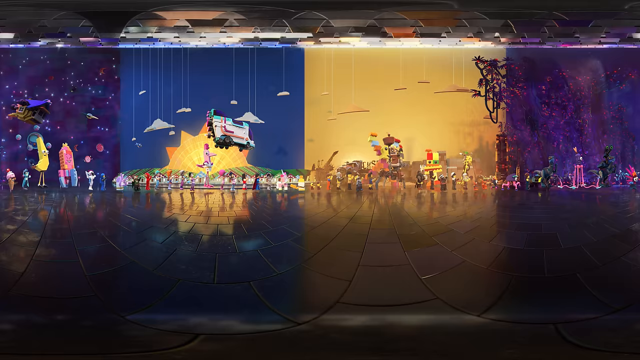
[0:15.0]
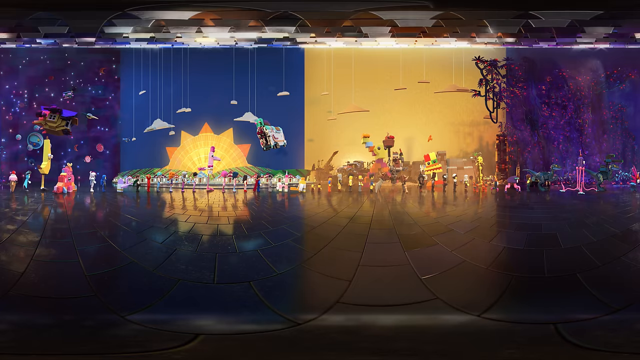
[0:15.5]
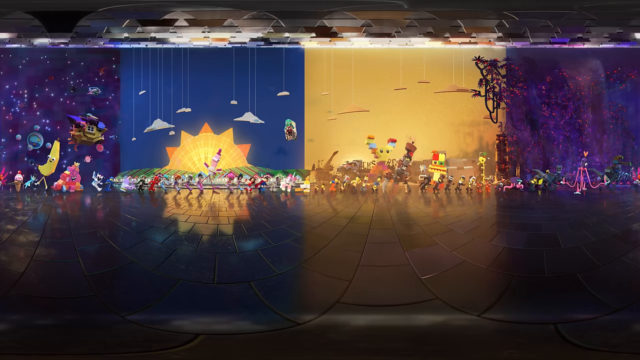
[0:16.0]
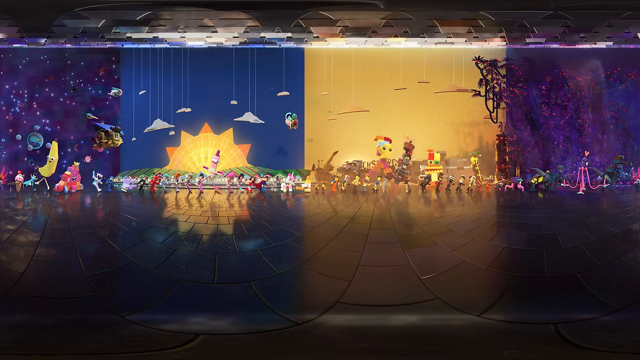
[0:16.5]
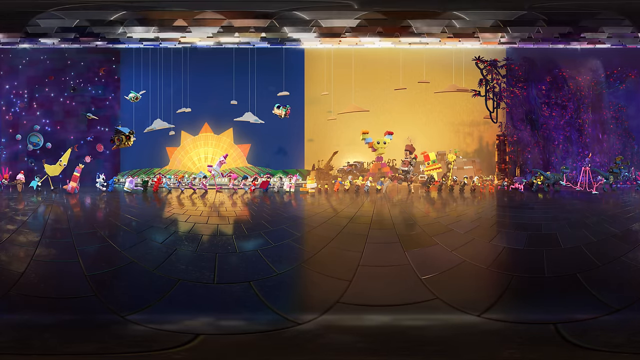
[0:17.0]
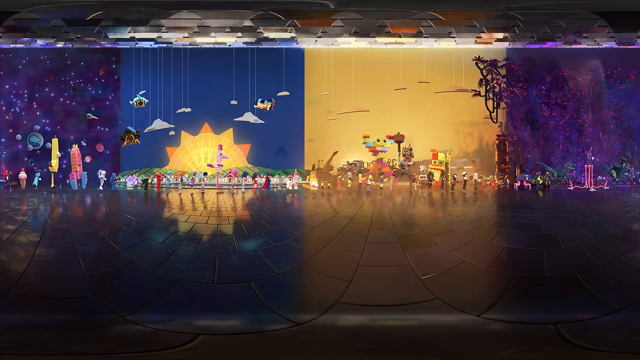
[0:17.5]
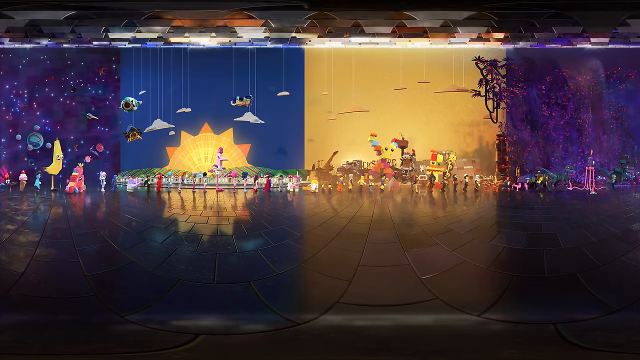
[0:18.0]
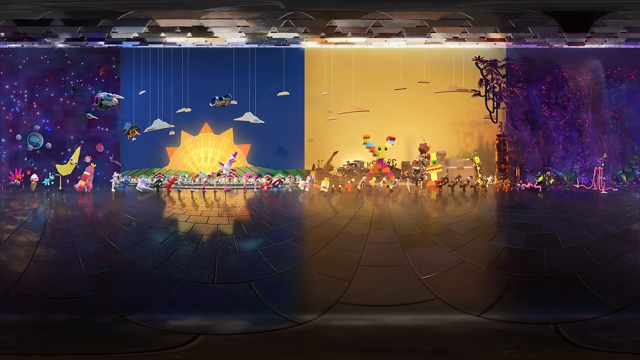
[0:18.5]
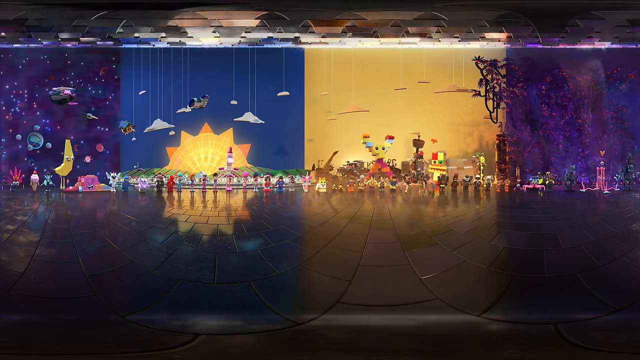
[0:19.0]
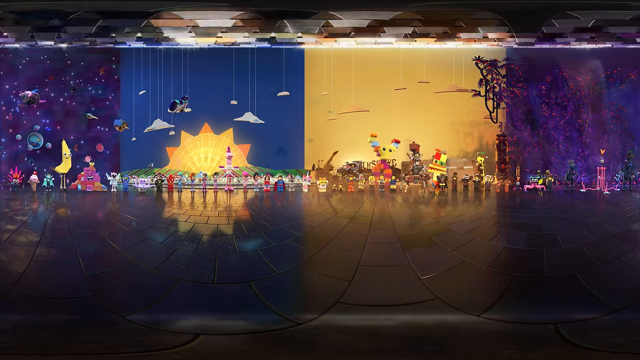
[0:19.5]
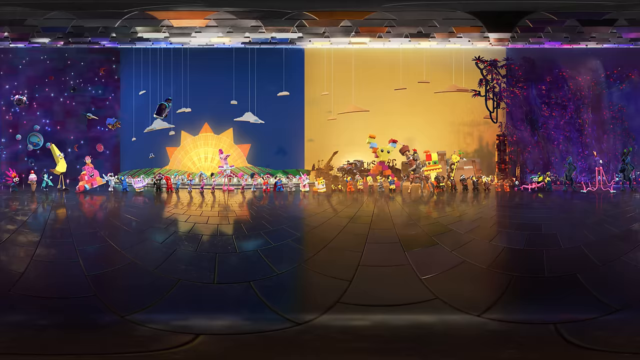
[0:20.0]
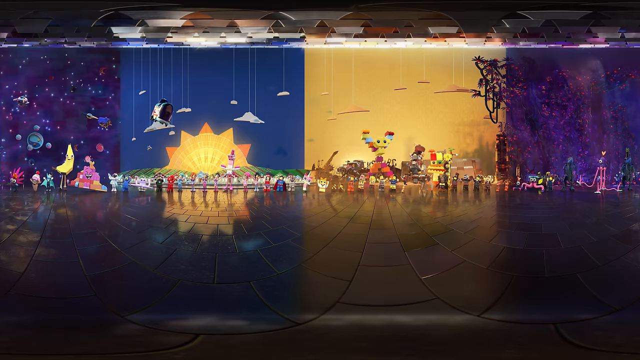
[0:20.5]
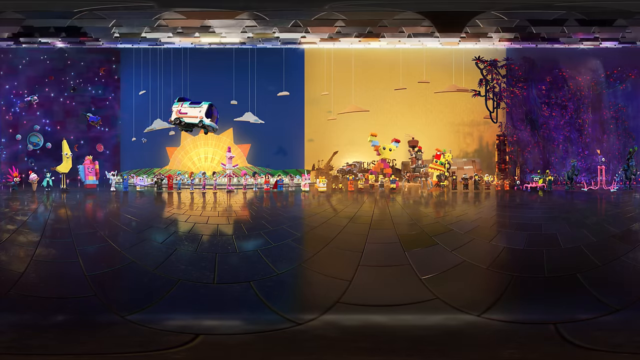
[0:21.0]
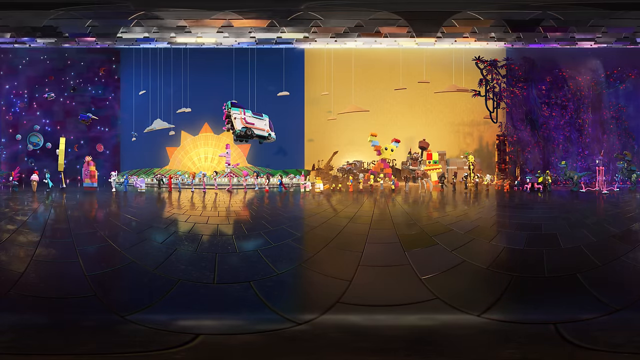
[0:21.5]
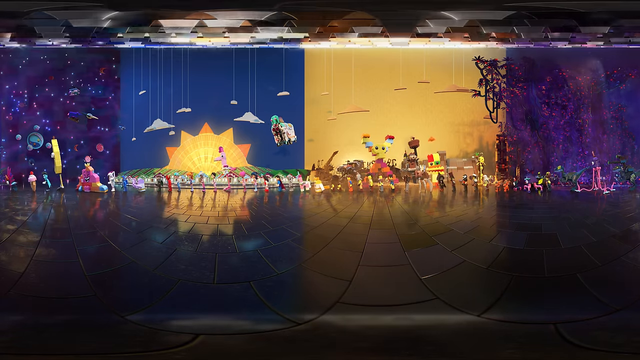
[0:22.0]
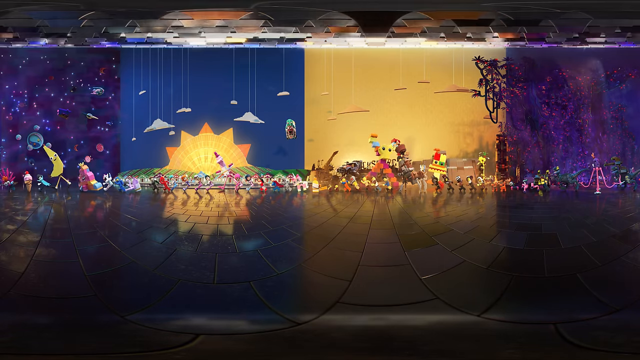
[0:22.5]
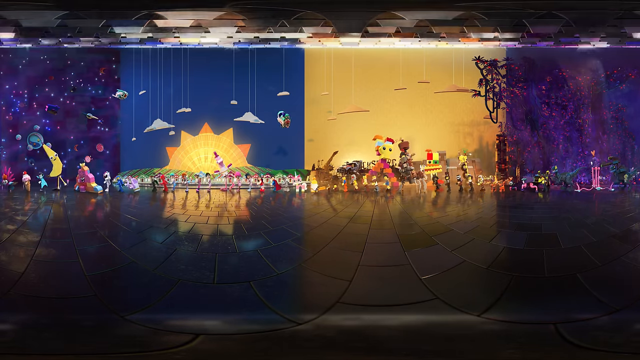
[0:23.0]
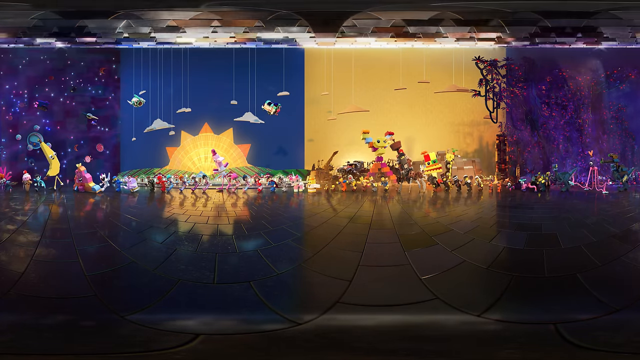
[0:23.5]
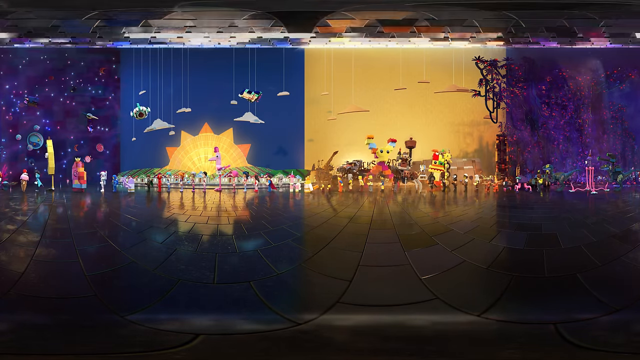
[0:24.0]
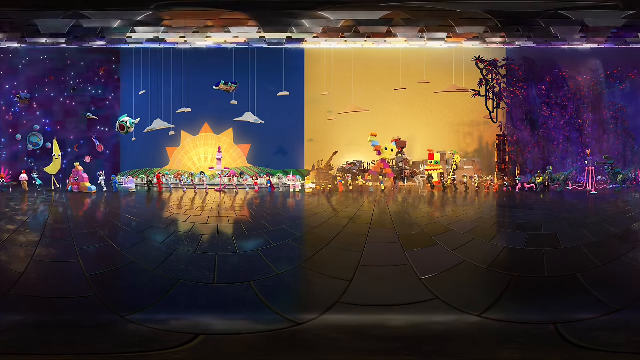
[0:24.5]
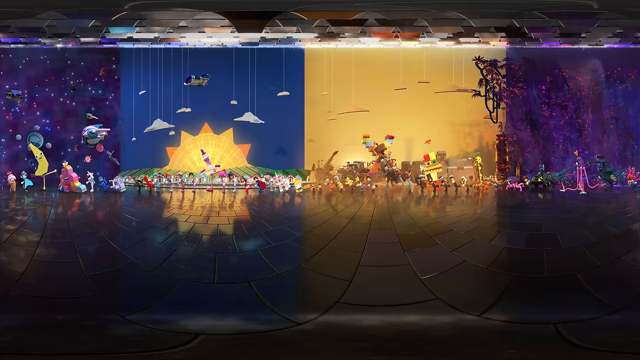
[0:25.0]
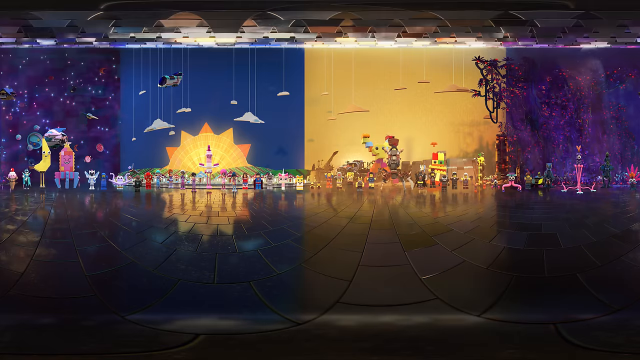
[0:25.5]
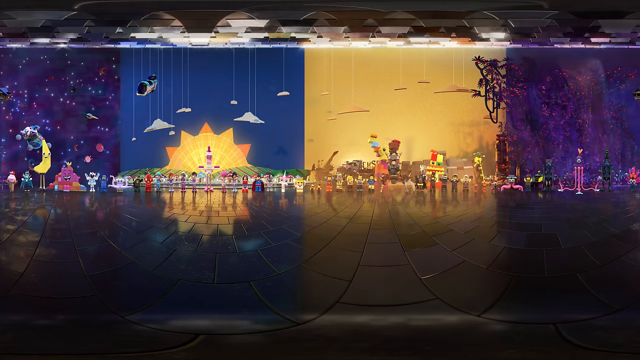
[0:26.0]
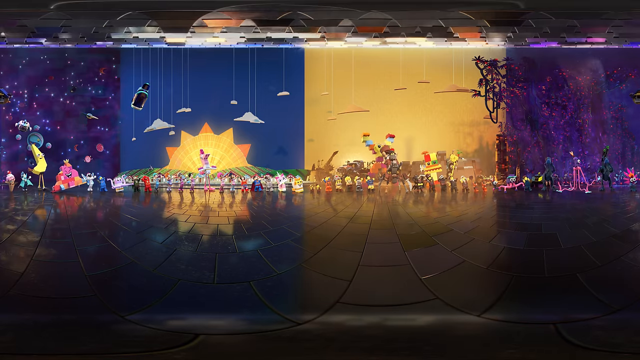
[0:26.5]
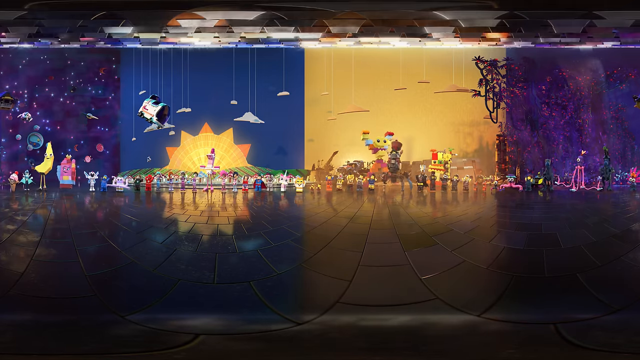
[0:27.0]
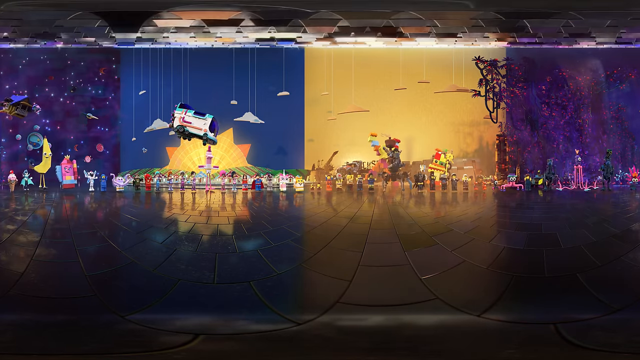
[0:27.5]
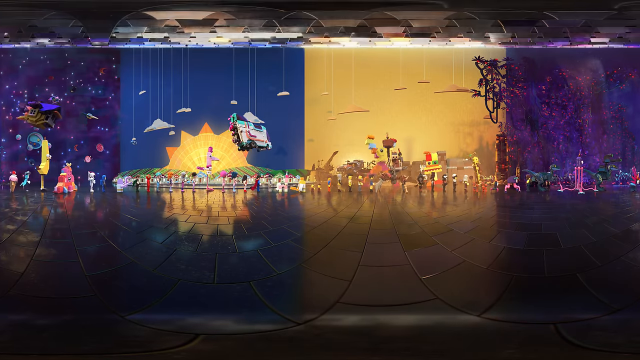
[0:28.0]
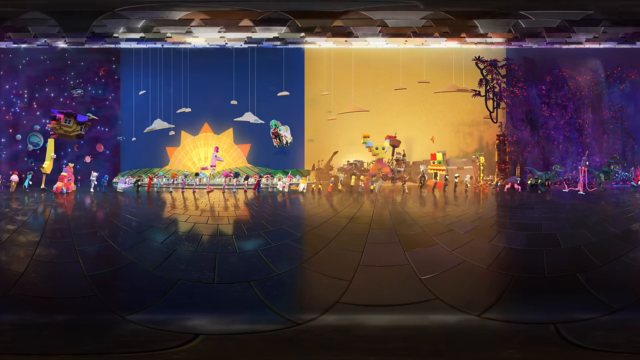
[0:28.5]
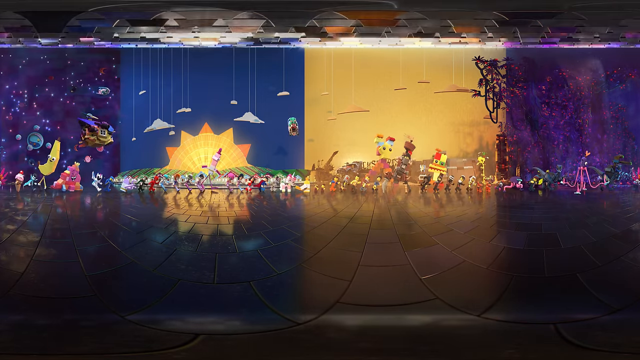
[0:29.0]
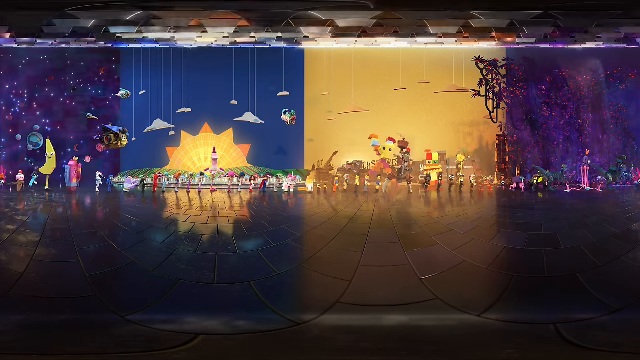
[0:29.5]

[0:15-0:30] The Lego figurines continue dancing, doing a line dance. All in a line, they head toward the right of the screen, then go to the front, kind of jump up and put their arms up, then head to the left of the screen, stop and face forward, then go to the right, and so forth. The figure in the sky comes through again, and some larger figurines are in the back behind the line. Part of the line is a very large, brown, creature-looking figurine with four legs.